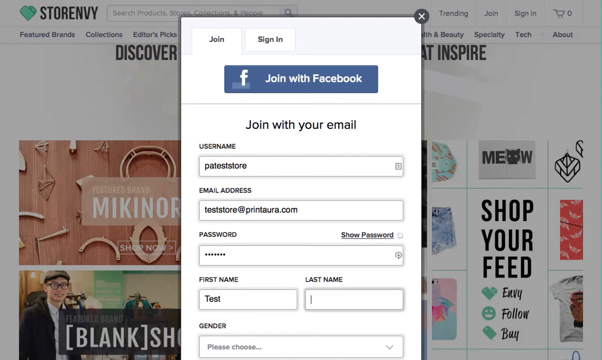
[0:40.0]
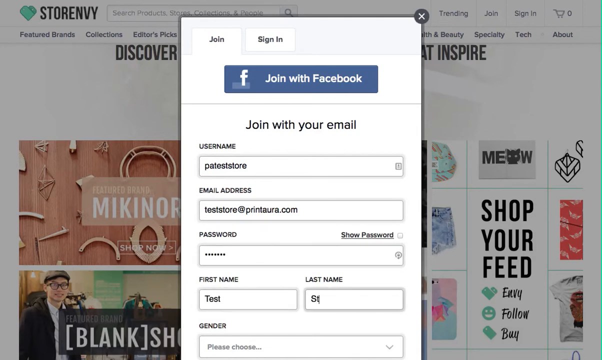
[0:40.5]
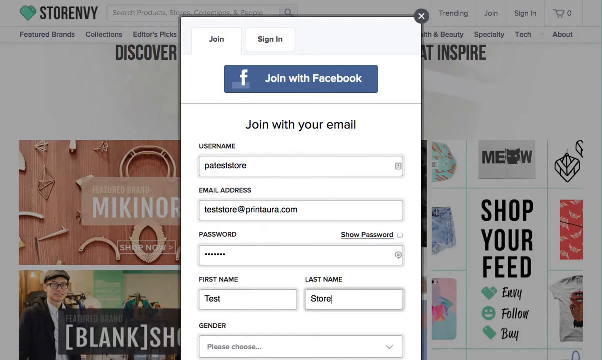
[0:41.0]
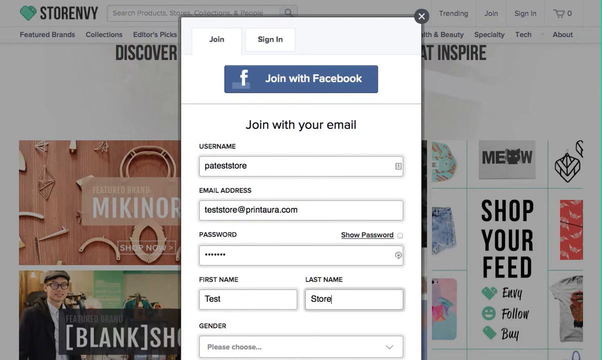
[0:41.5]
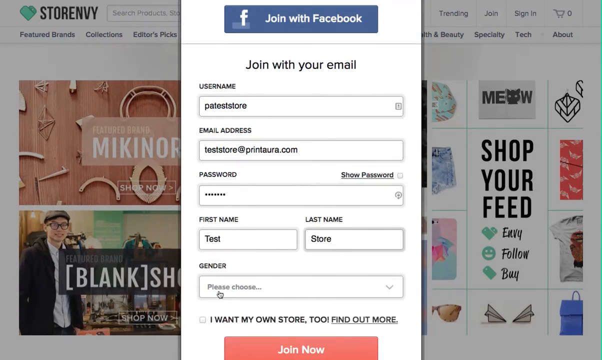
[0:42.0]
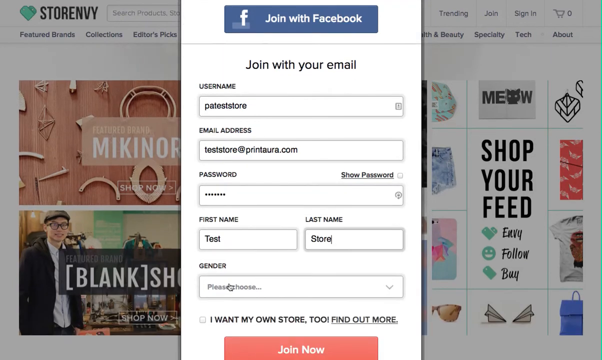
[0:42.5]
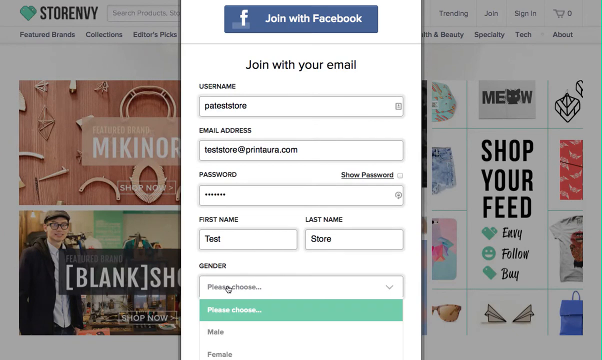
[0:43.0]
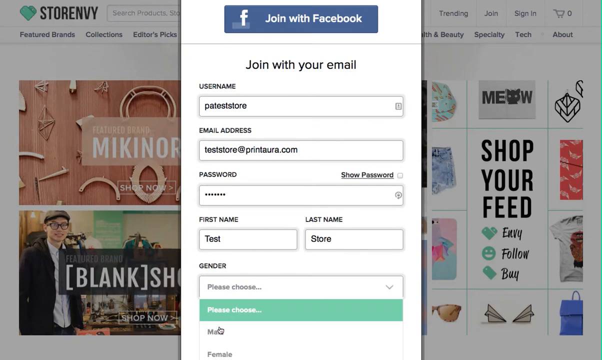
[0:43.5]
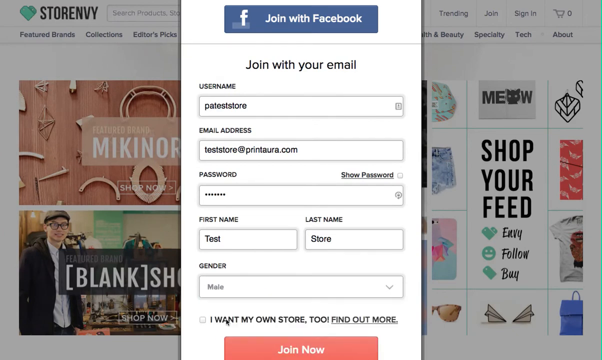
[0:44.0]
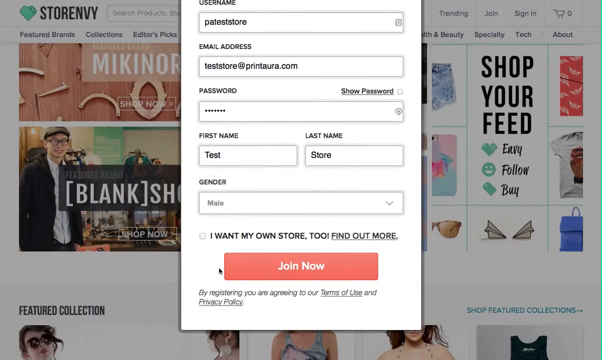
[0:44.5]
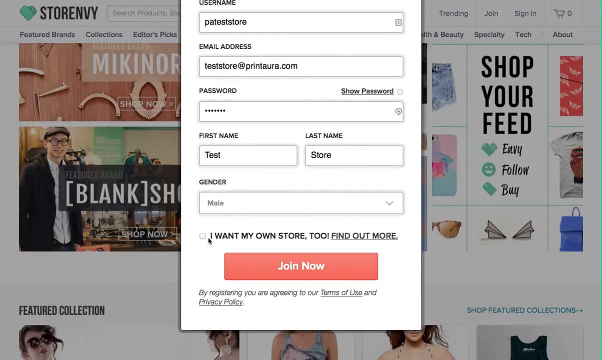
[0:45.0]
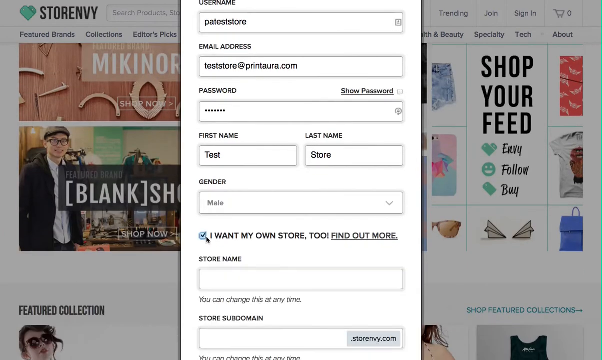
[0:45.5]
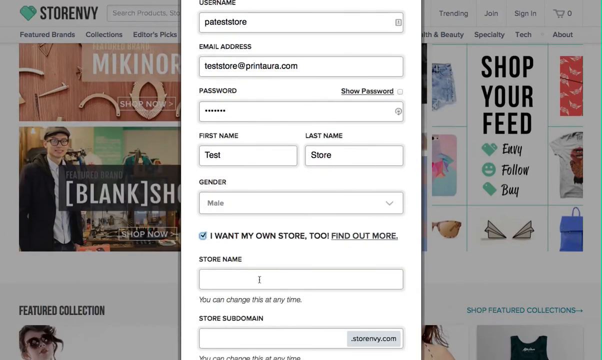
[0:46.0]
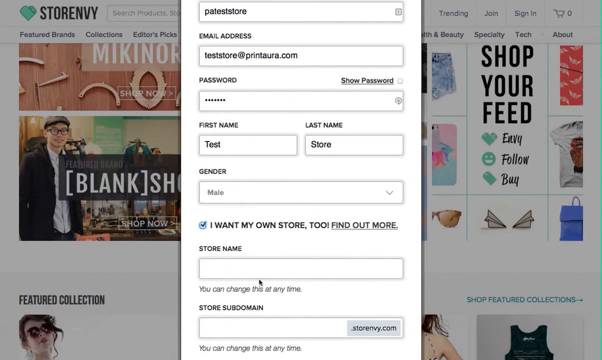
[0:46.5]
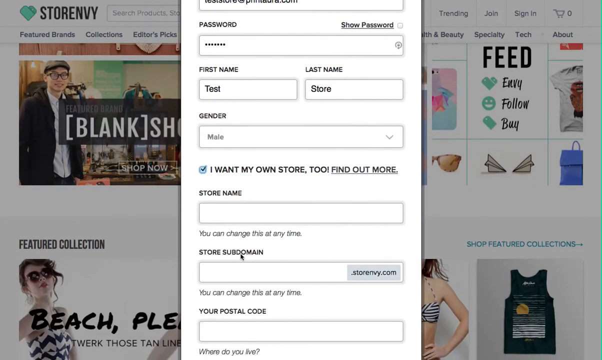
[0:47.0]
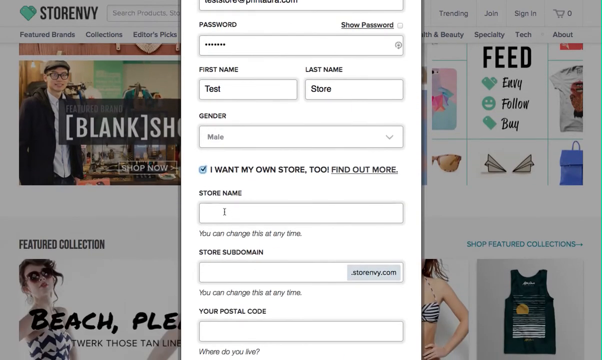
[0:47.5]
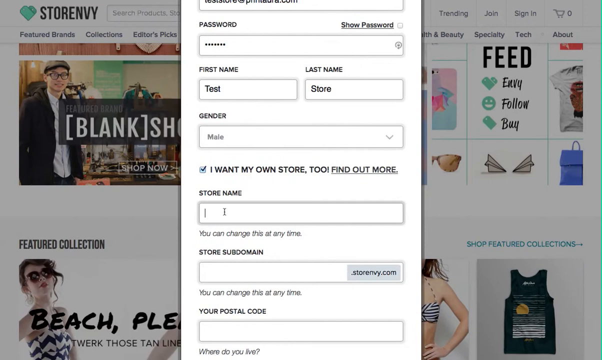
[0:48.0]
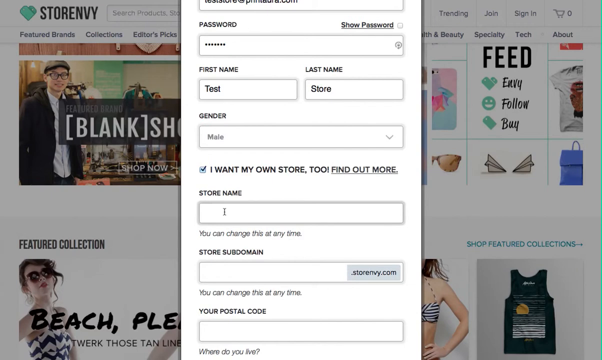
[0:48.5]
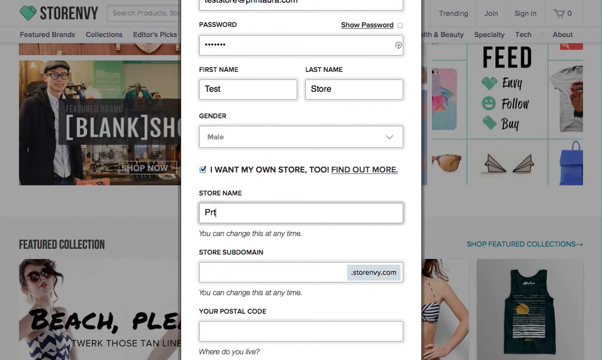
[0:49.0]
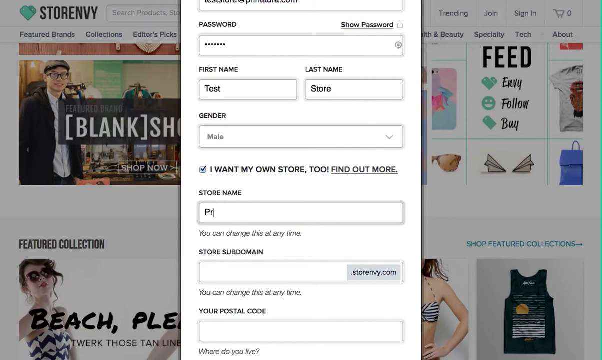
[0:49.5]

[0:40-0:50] The user types the word "store" into the last name field, then scrolls down the website a bit more. They open a gender dropdown and choose male. Next they click a checkbox reading "I want my own store," which opens a few more fields on the form, and they type "print A" into the store name field. The form is a modal with a cross button in its top right, and it appeared after the user clicked the join button on the website.